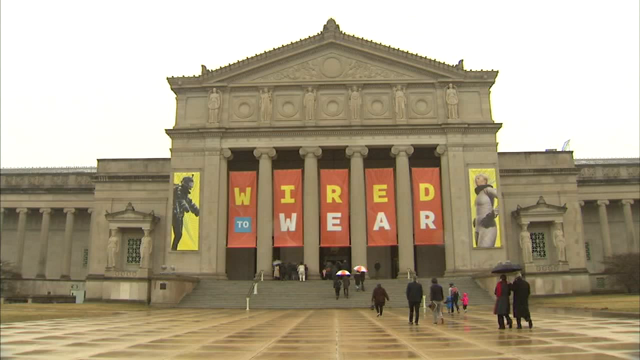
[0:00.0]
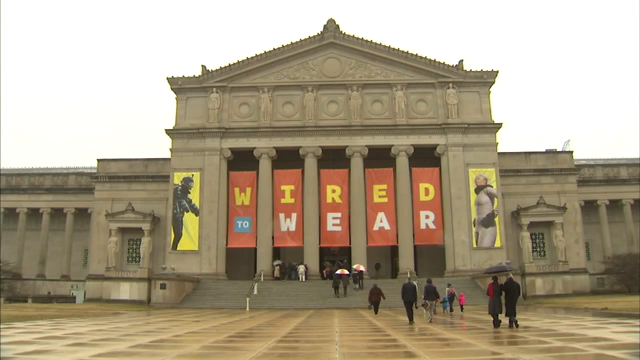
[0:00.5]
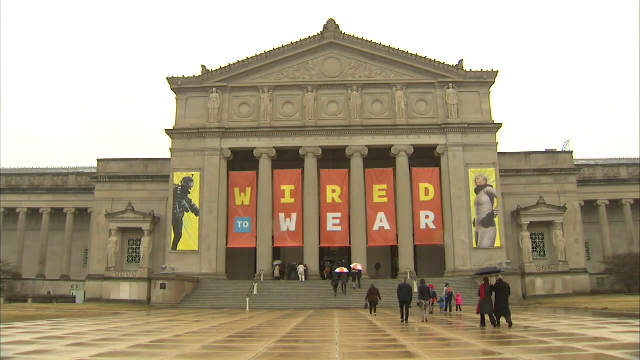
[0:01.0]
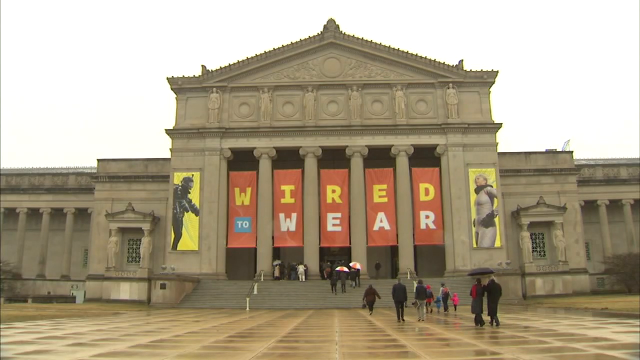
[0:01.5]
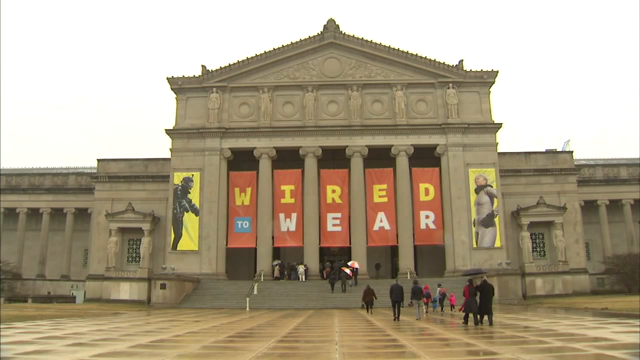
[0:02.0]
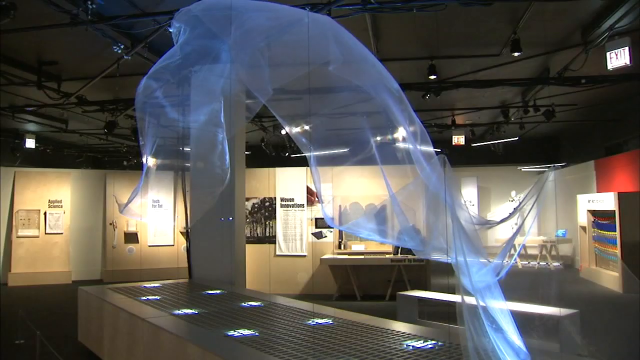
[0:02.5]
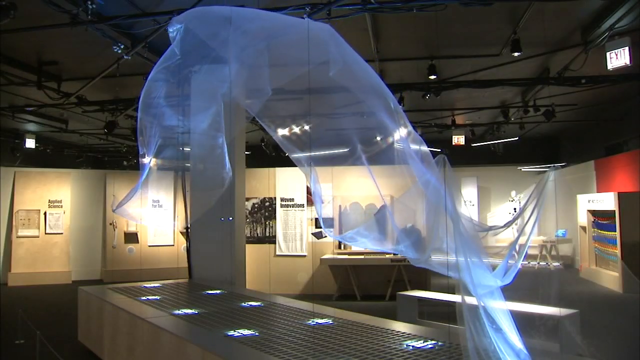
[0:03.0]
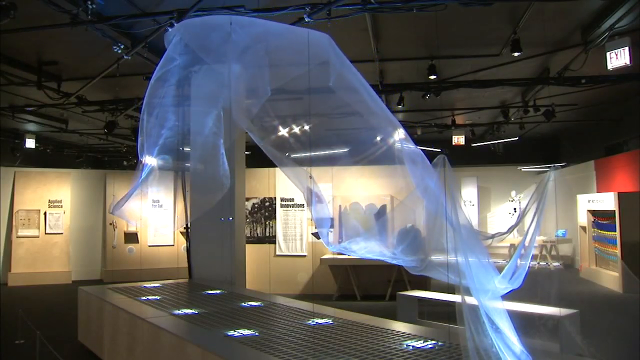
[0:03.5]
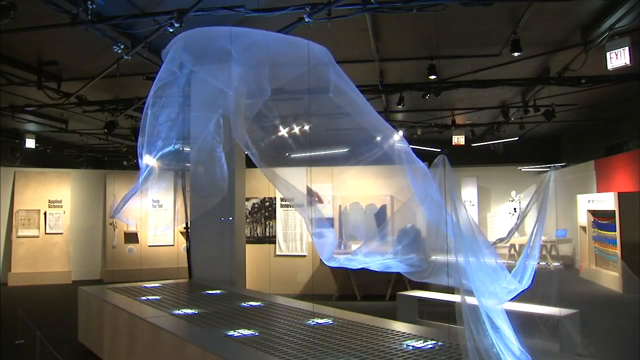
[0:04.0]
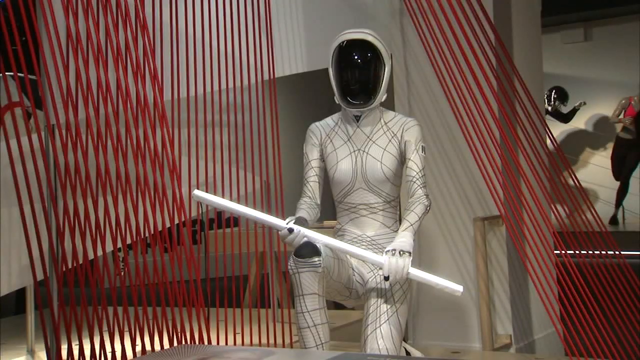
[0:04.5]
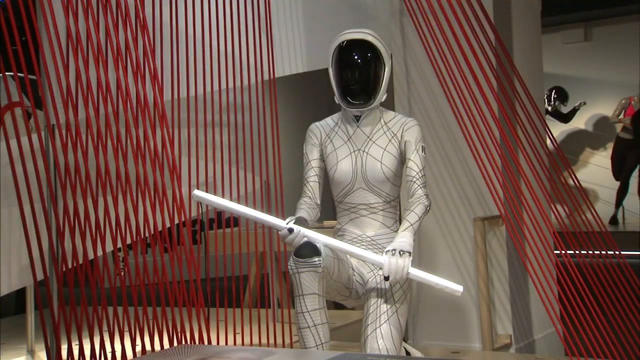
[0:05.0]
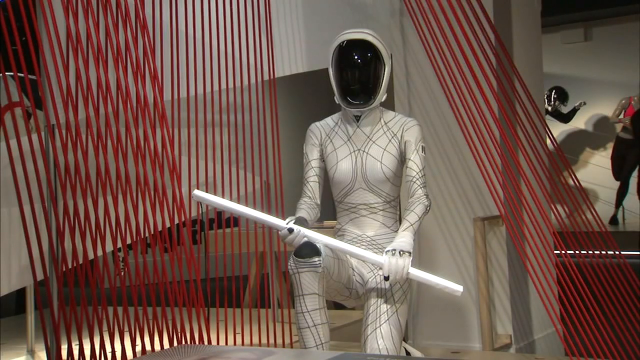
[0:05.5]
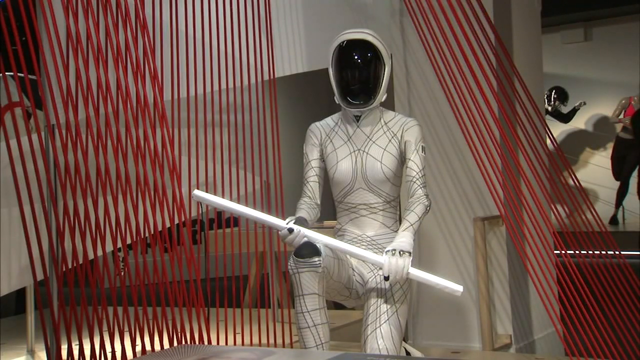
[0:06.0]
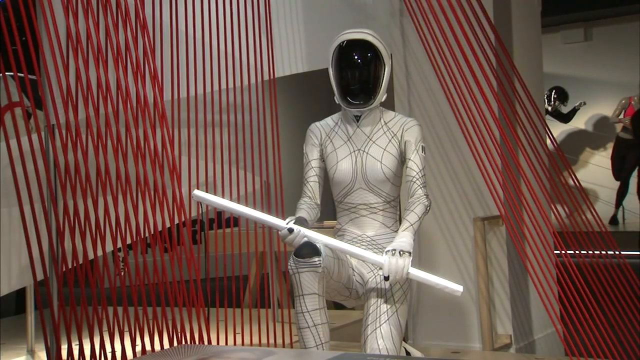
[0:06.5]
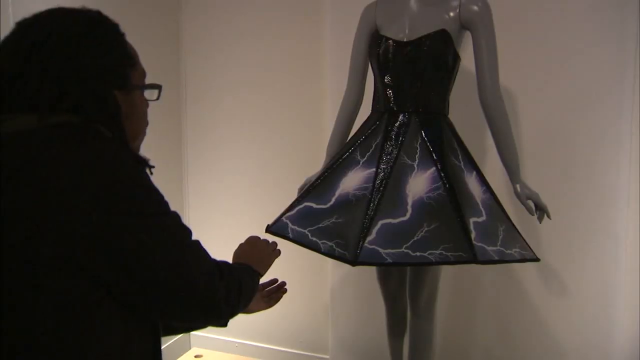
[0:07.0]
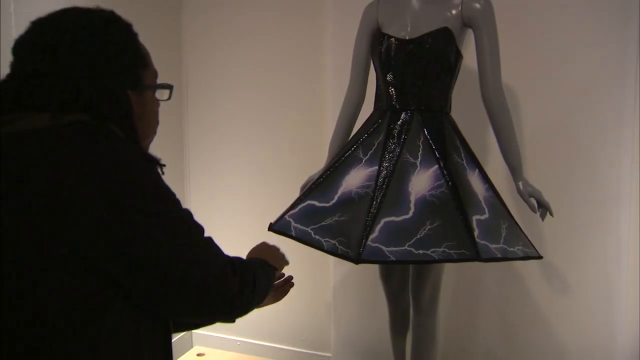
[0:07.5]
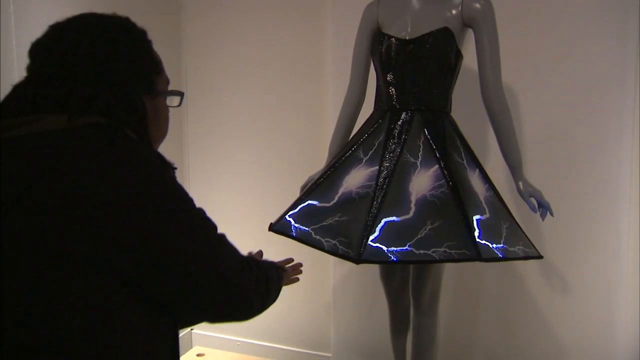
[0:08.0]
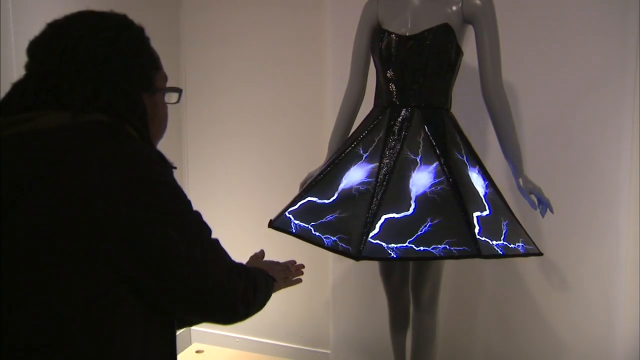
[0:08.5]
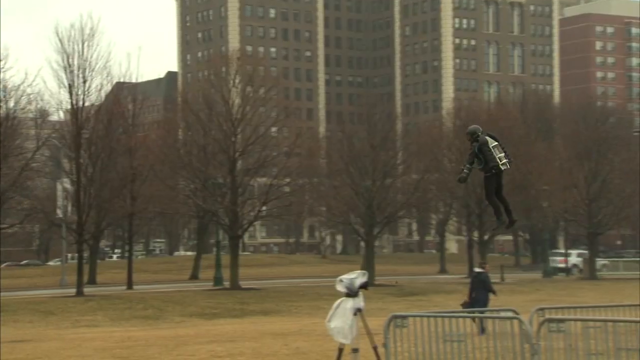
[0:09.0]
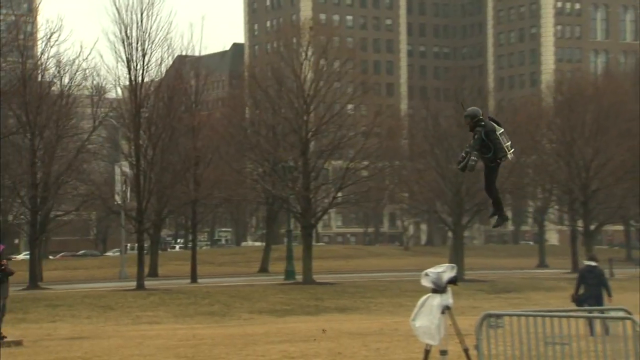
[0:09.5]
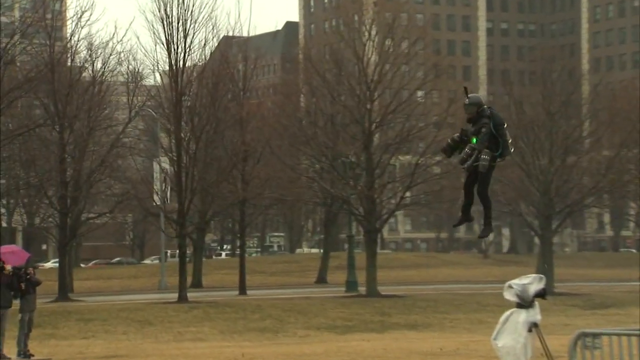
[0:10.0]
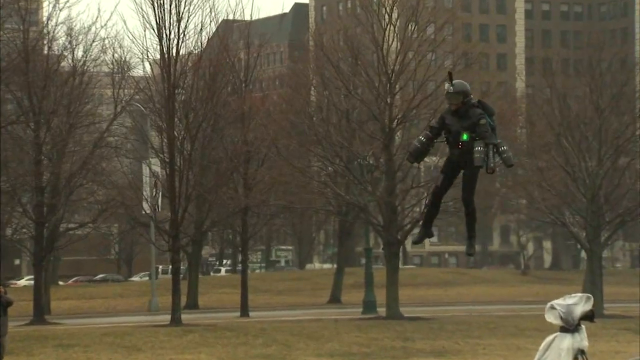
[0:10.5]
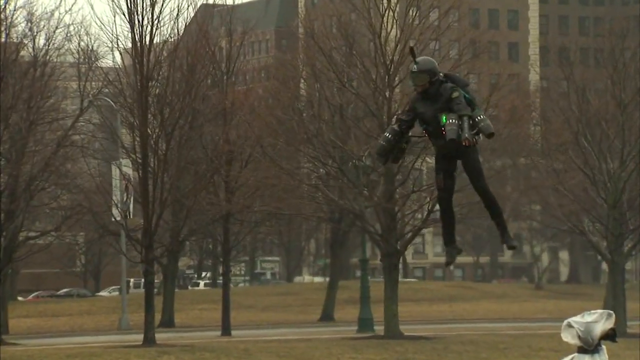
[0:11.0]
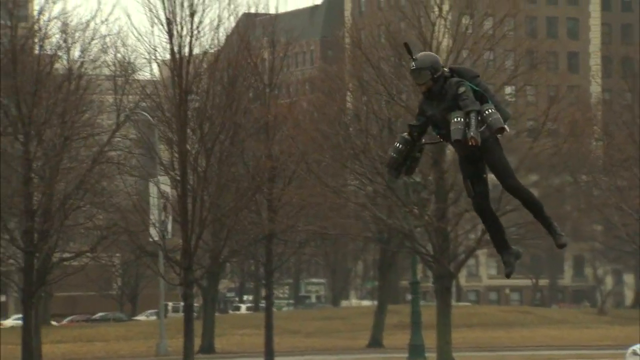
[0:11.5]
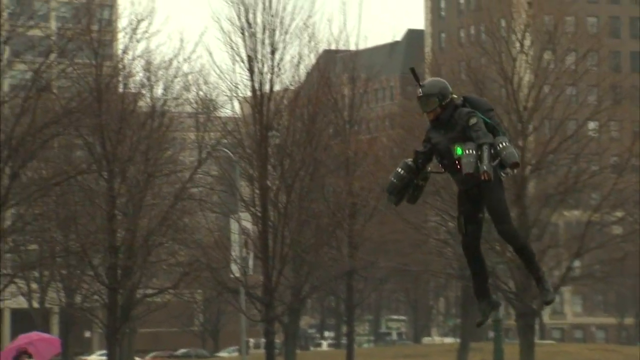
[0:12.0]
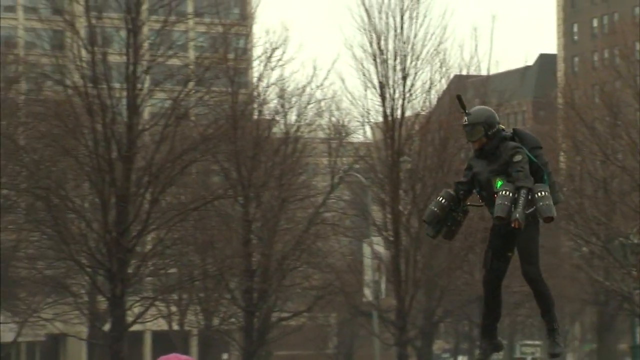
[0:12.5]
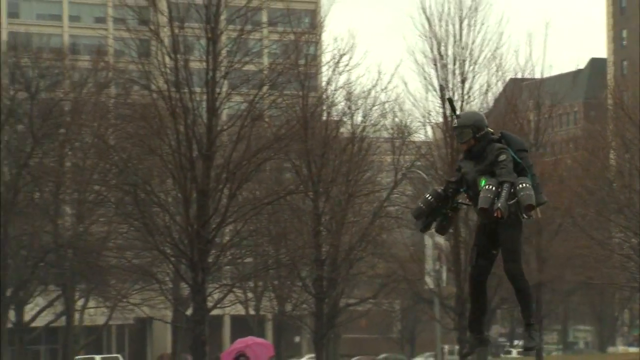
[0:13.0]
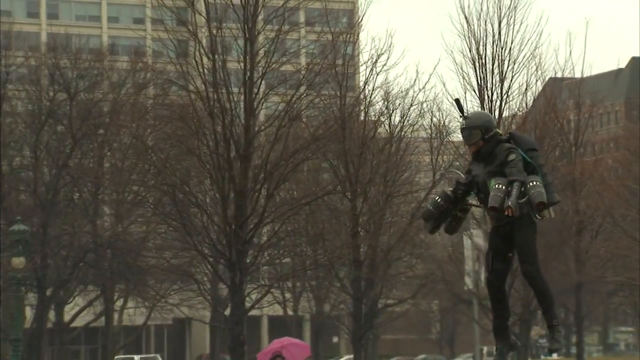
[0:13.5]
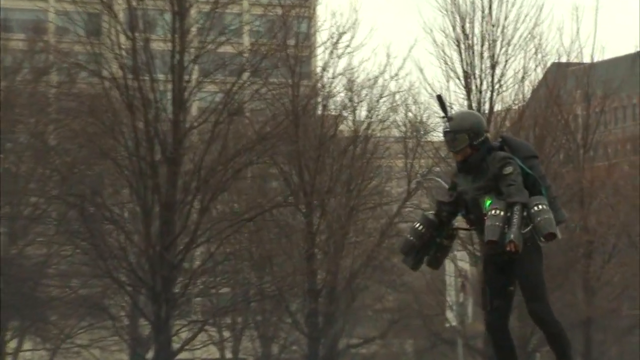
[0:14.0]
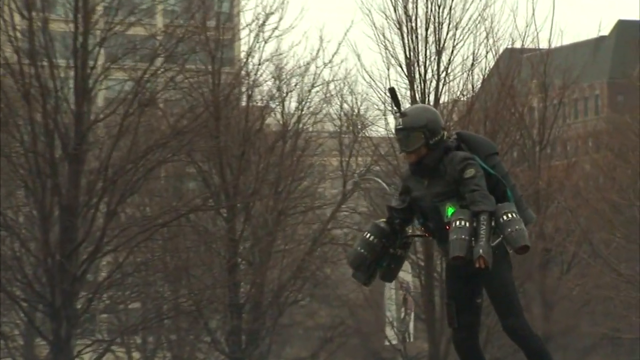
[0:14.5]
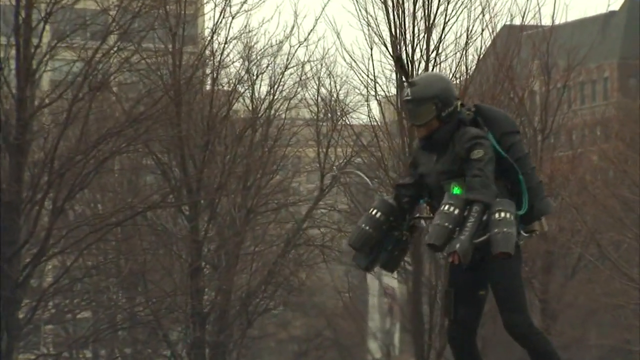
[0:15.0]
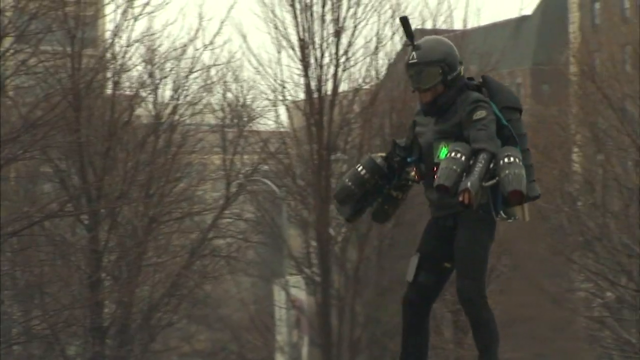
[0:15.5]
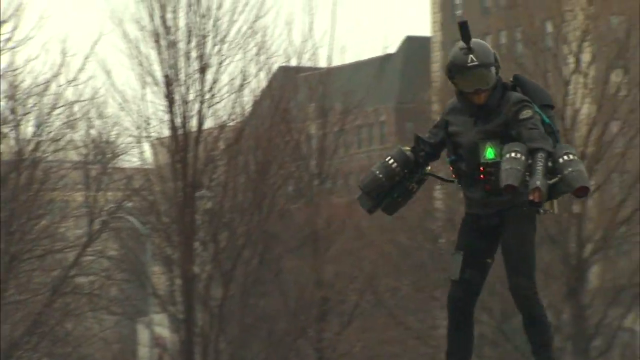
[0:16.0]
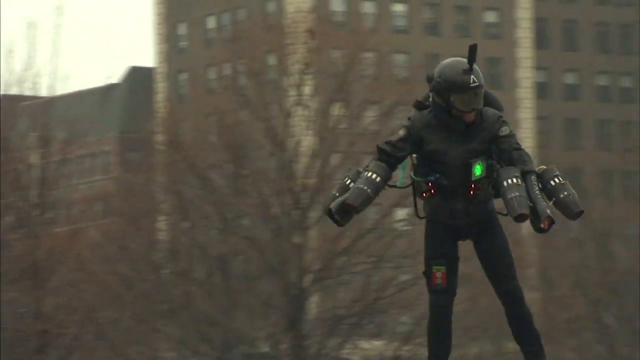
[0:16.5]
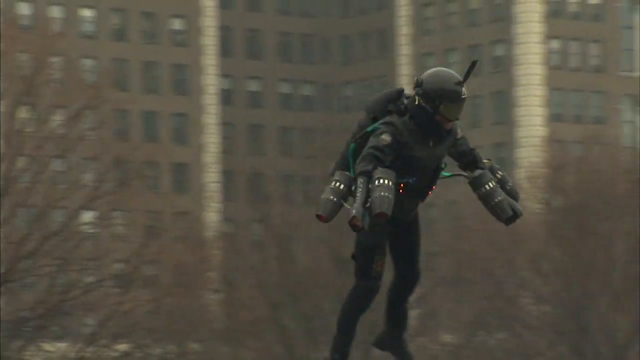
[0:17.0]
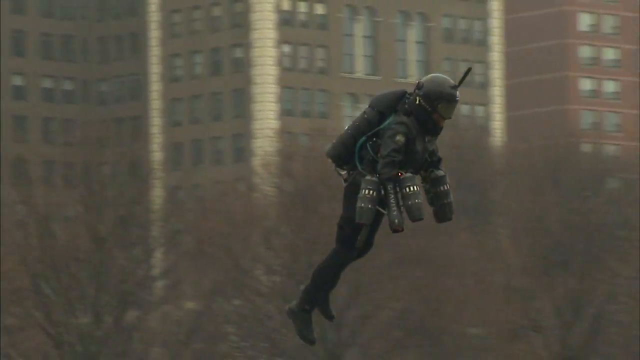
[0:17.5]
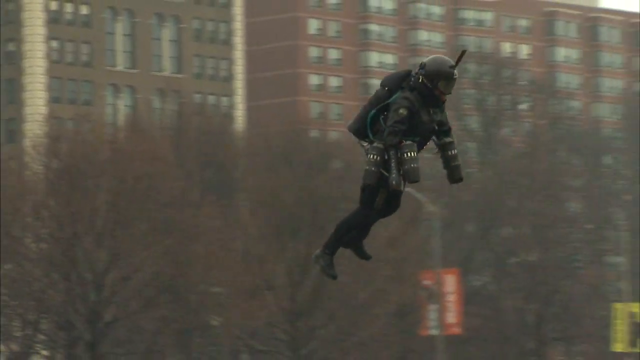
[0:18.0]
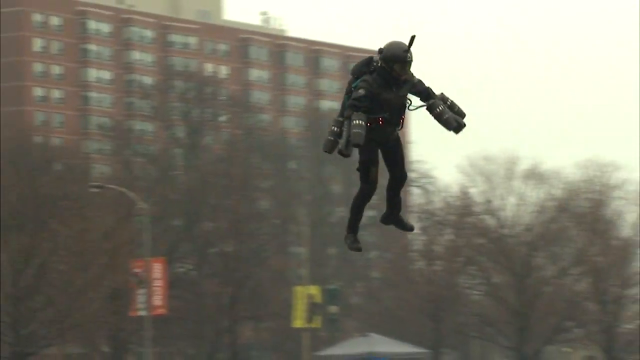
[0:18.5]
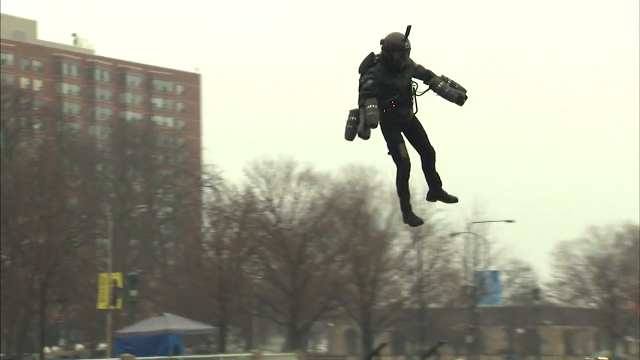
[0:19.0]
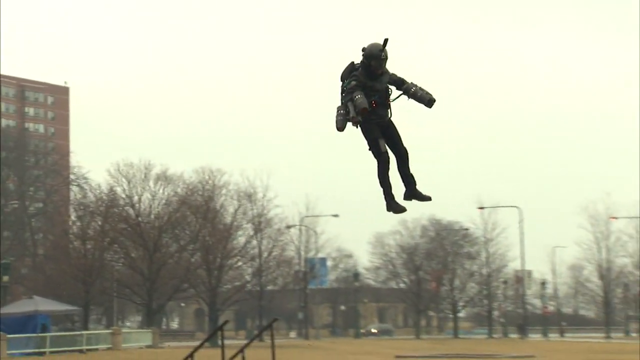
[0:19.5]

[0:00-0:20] A building that is not very tall but looks very Washington-like and government-like appears, and it looks to be holding some type of event or convention, with a banner across it that says "Wired to Wear." The shot zooms in and transitions to what is most likely the inside, showing exhibits and expos of what looks like some type of transcending blue light and fabric. Next comes a fancy outfit that looks pretty advanced: a white latex suit with a helmet. A woman is with a dress, and as she claps at it, the dress lights up in blue. Outside, a man wearing all black has thrusters on his hands, three on each hand and six in total; wearing a helmet, he floats and flops around outside, apparently using the thrusters to do so.